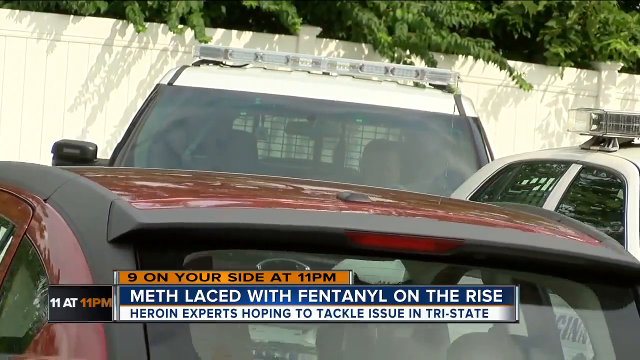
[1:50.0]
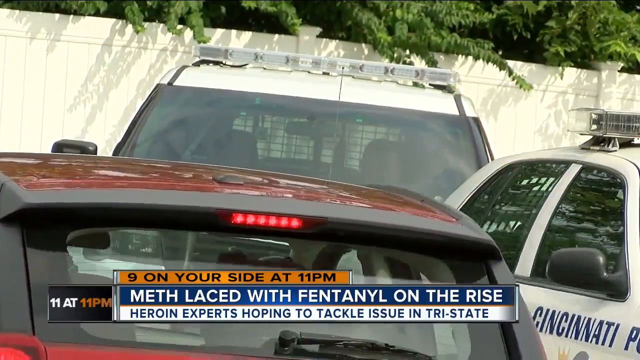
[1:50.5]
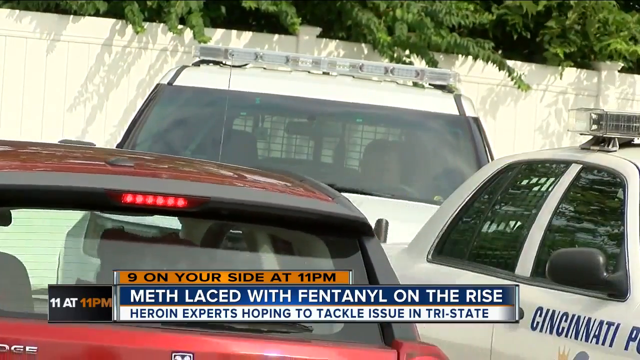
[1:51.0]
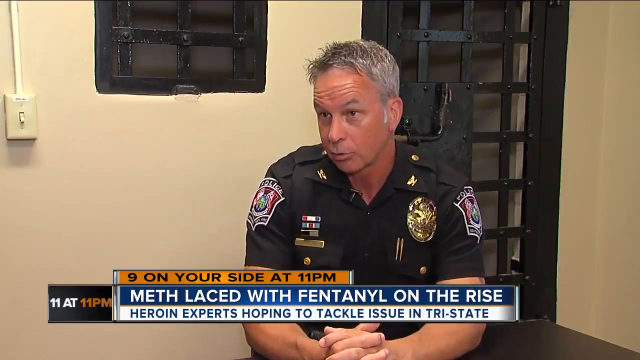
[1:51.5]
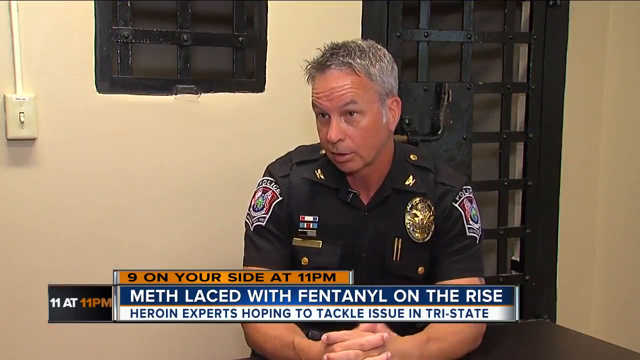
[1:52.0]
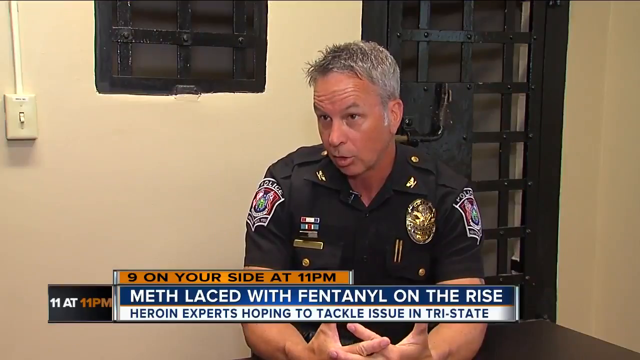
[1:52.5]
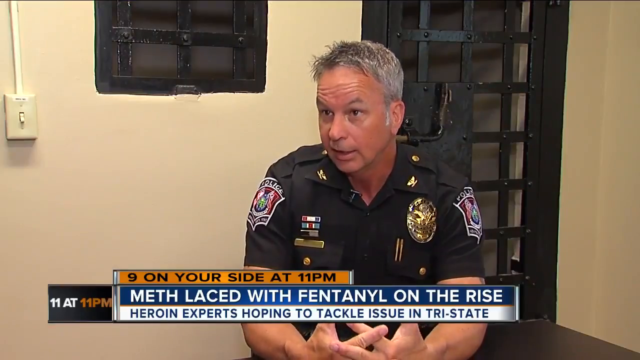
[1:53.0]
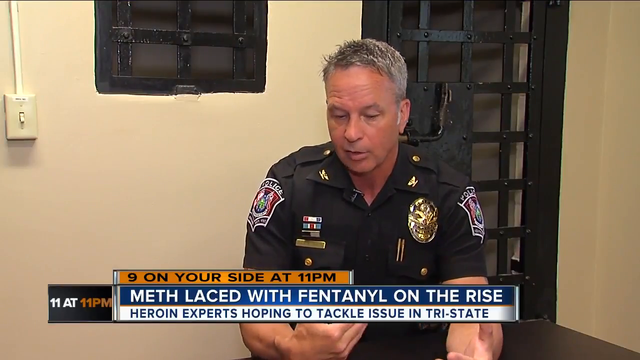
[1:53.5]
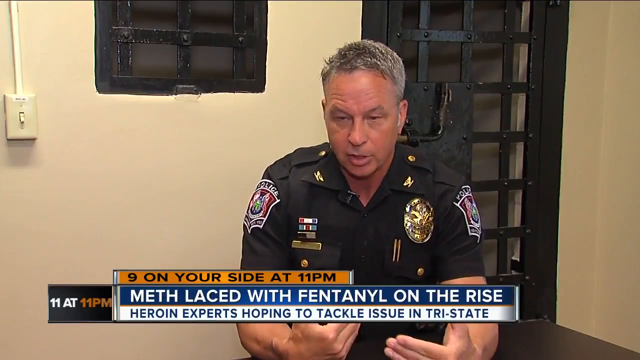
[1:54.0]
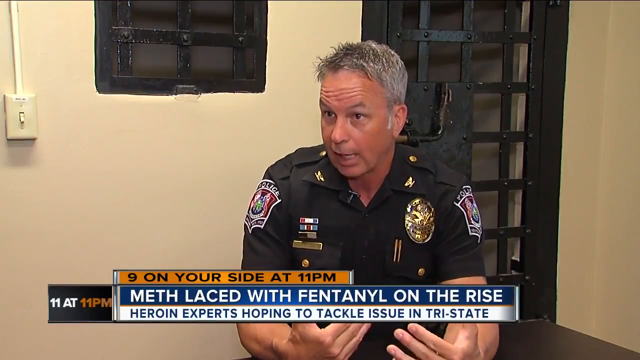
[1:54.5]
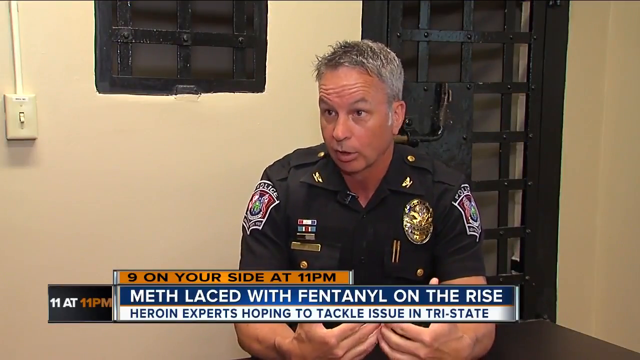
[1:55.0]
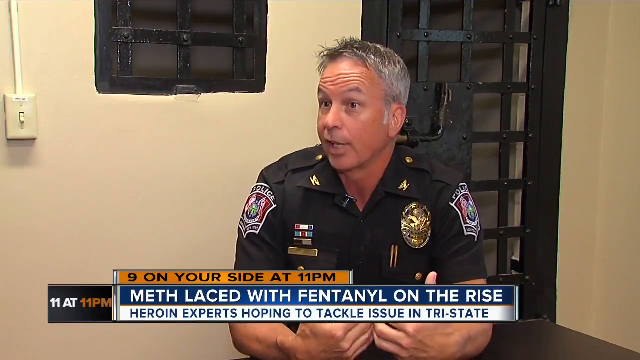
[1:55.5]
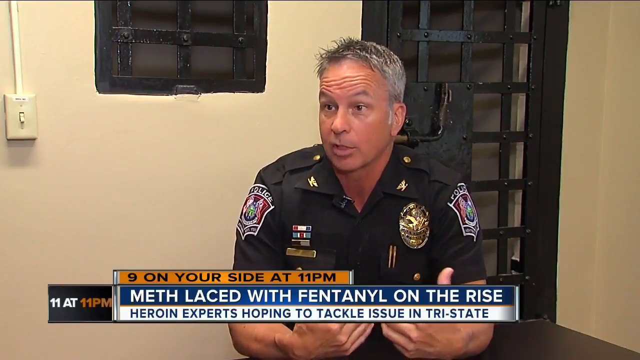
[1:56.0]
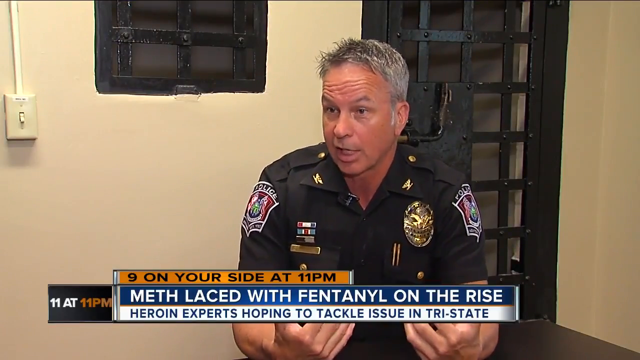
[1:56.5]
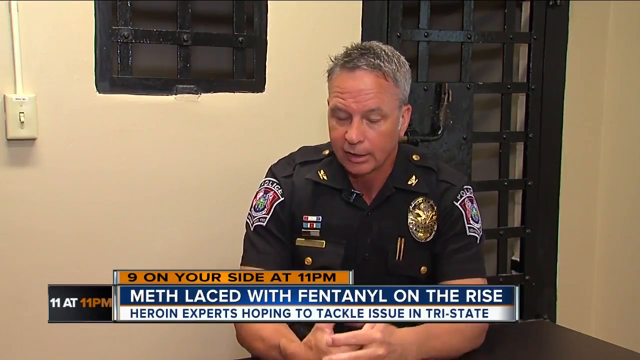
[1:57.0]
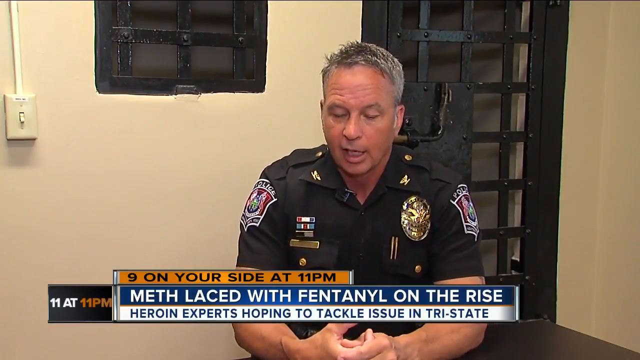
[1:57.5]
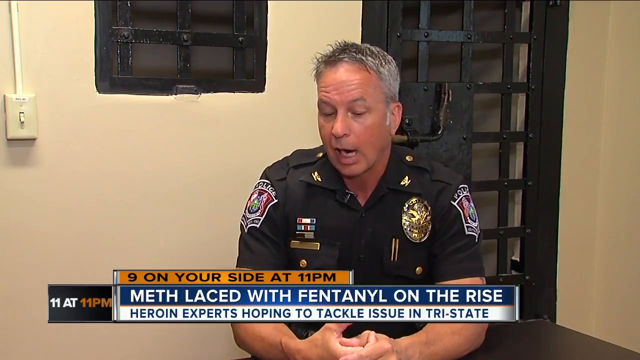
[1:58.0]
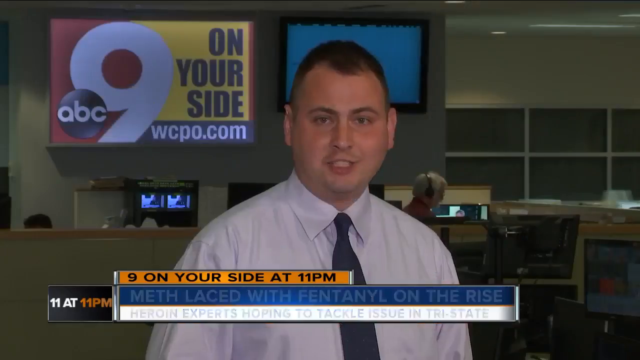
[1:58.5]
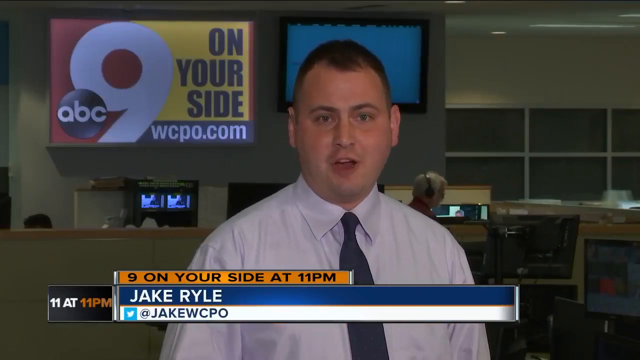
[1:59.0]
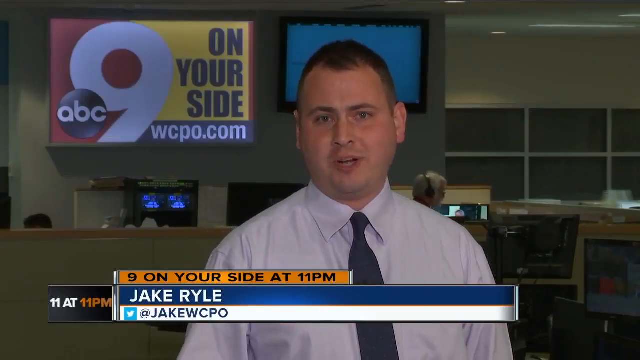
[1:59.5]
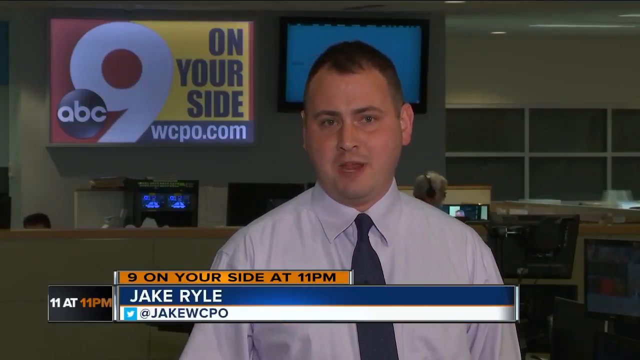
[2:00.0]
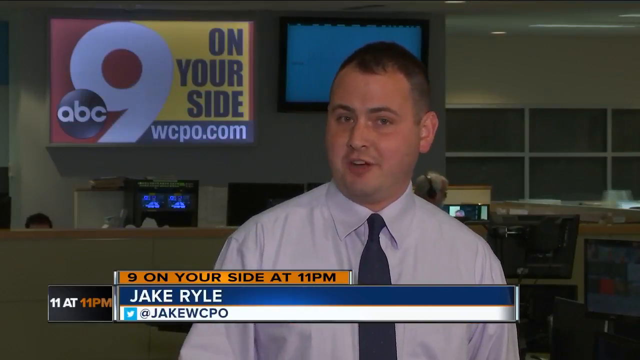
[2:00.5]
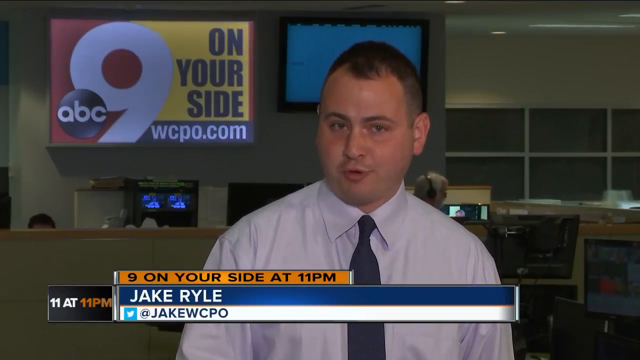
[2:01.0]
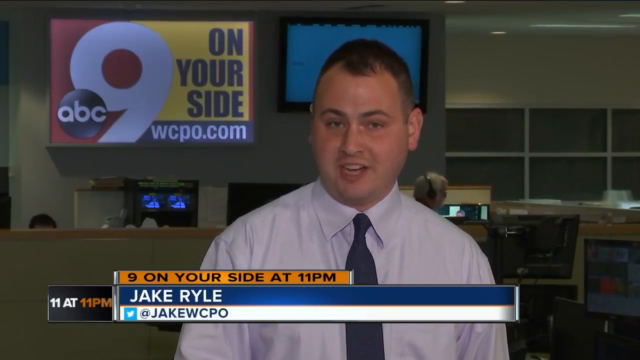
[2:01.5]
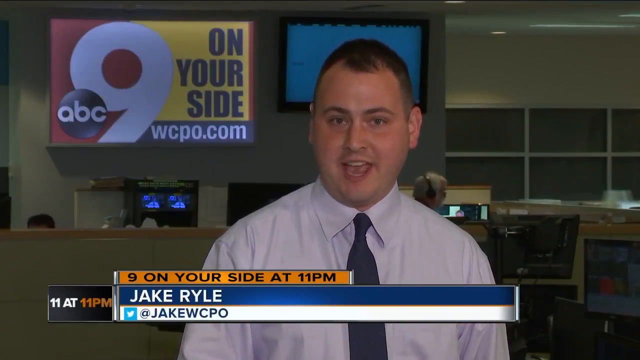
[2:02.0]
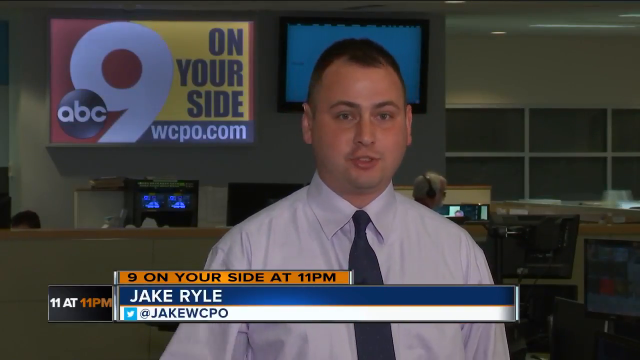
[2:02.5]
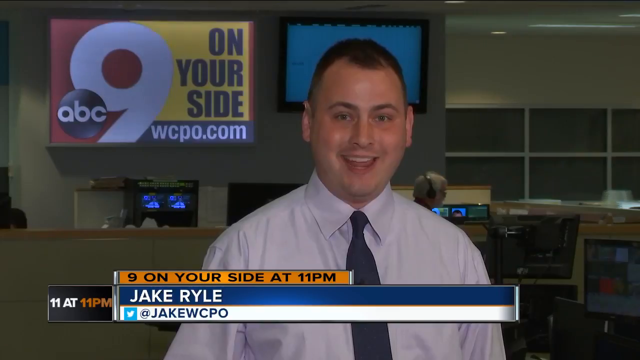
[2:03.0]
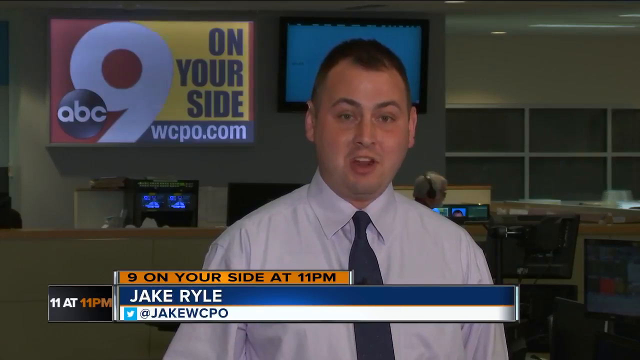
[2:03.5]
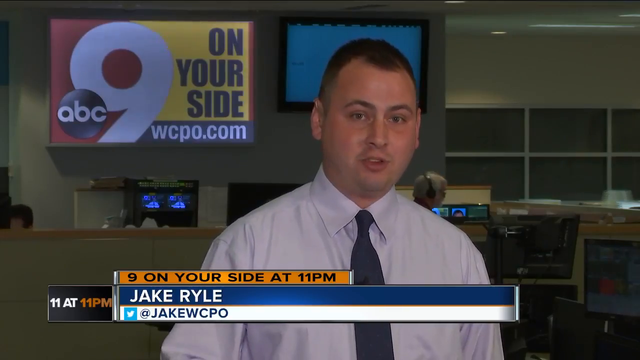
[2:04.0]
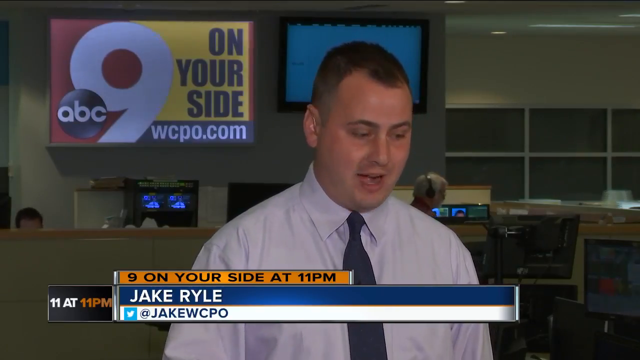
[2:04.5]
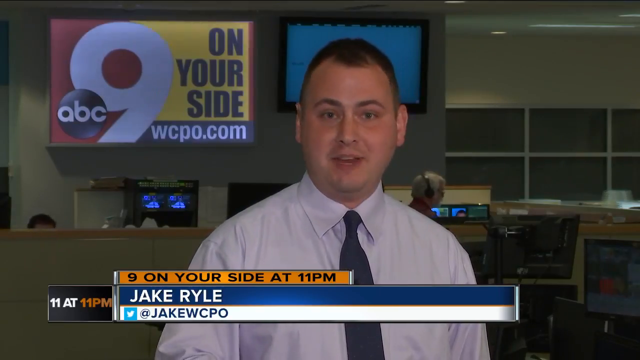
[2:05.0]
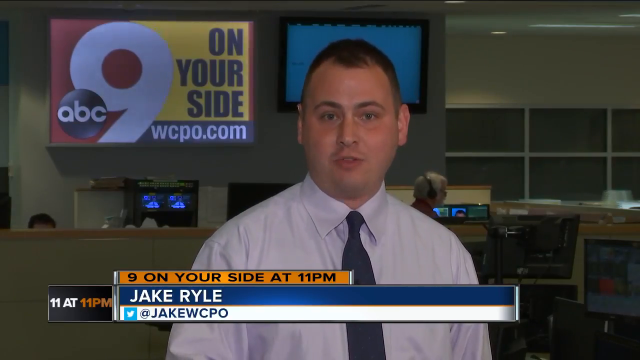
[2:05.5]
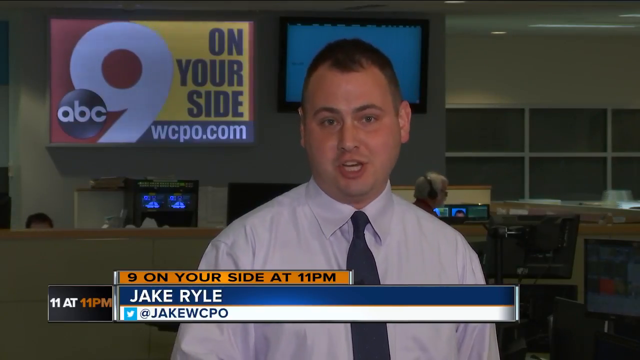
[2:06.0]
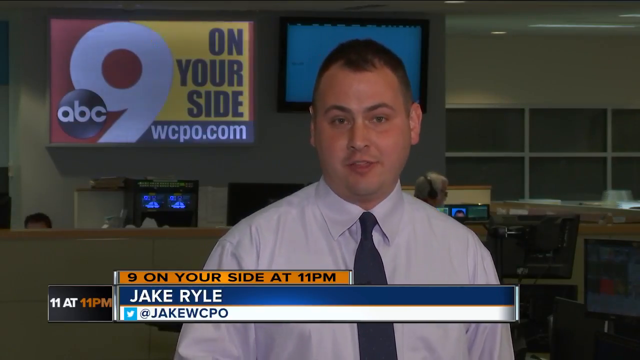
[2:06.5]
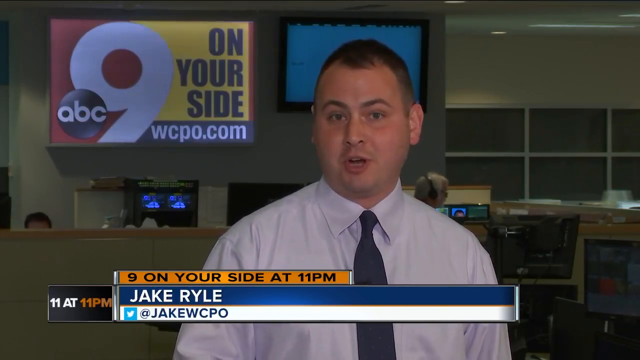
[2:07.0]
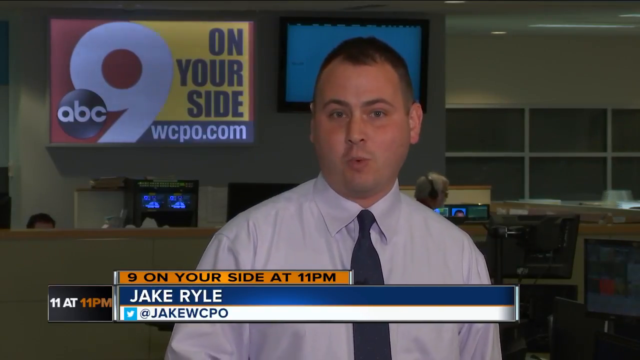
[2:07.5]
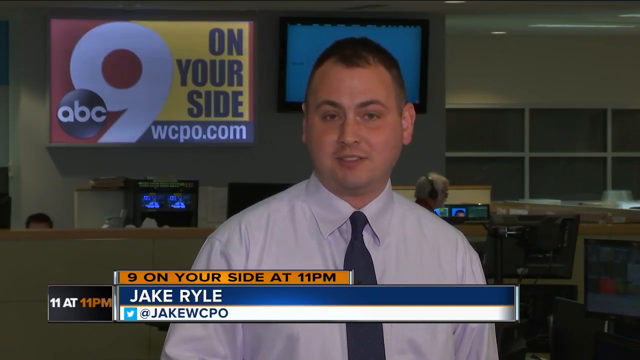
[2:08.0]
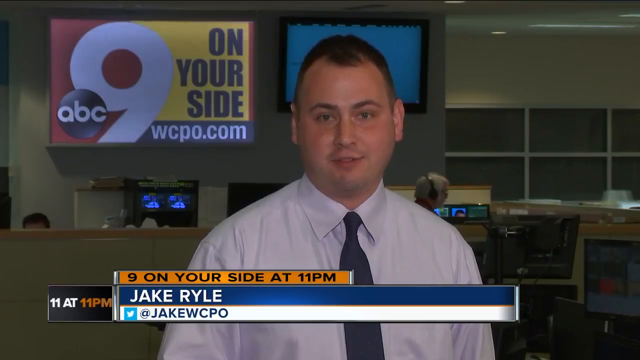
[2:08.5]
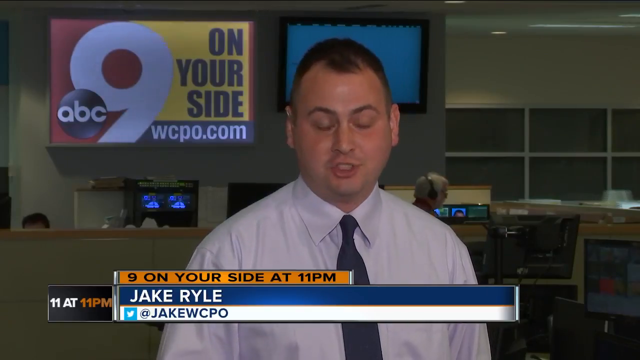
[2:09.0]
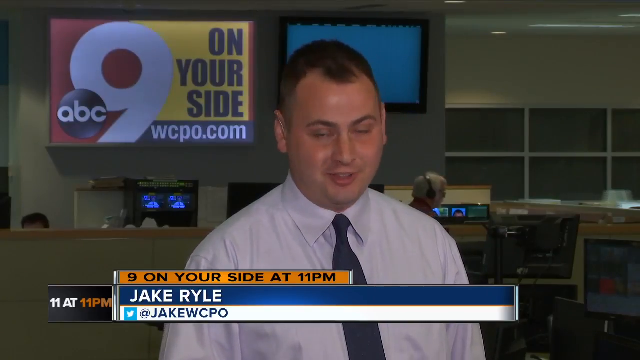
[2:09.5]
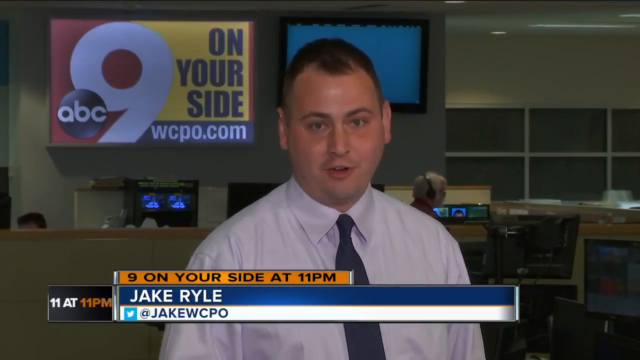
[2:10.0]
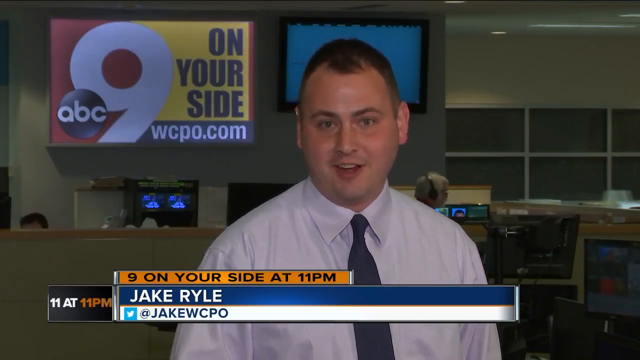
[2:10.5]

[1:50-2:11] A white car, possibly a police car, is parked, and the top of a dark red car is visible driving out of the parking space next to it. The policeman is shown again, shaking his head and gesticulating. The broadcast returns to the studio with Jake Ryle, which is quite empty. On the left of the screen is a sign that says "ABC9 on your side", and a smaller screen behind Jake is partially obscured by his head. On the right of the screen, the newsroom is not very busy, with one or two people working in the background, including a grey-haired person just over Jake's left shoulder. Jake is round-faced with very short, dark, receding hair, and wears a shirt with a very dark blue tie that is tied a bit too tight. He talks, nods his head and ends with a smile to the camera.